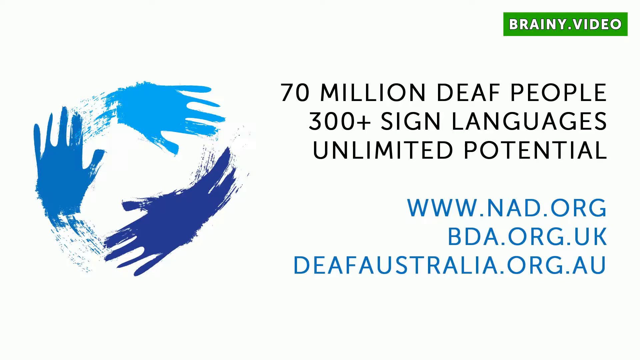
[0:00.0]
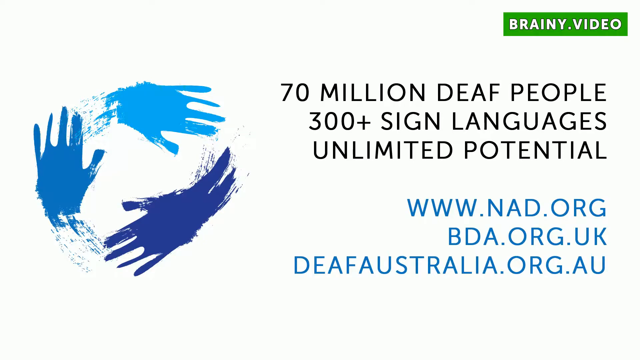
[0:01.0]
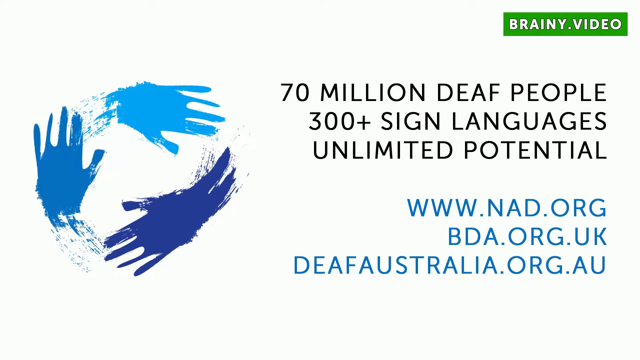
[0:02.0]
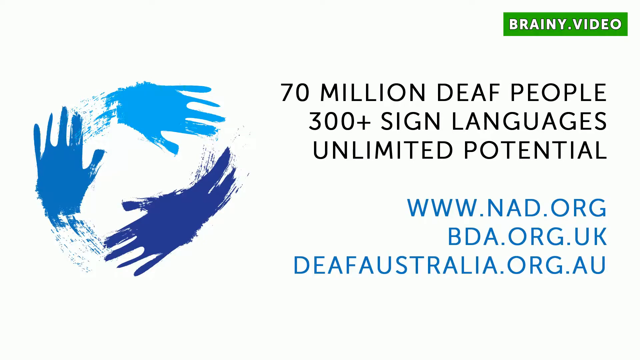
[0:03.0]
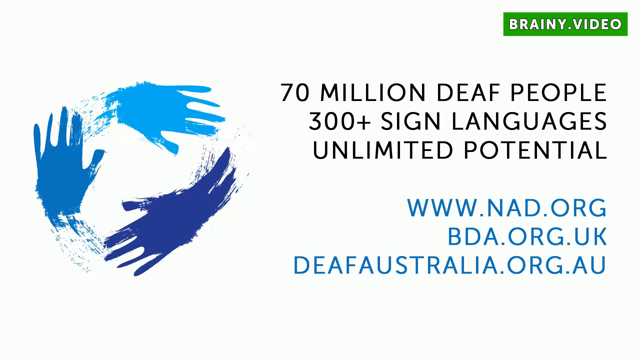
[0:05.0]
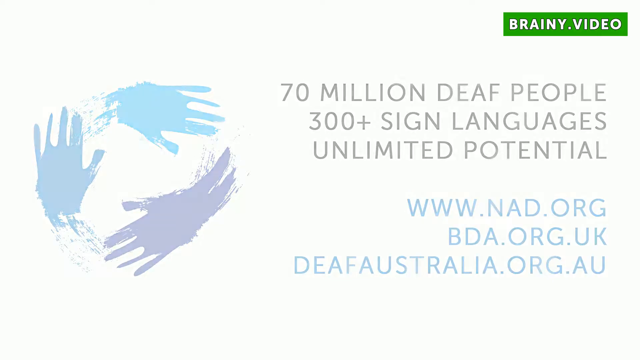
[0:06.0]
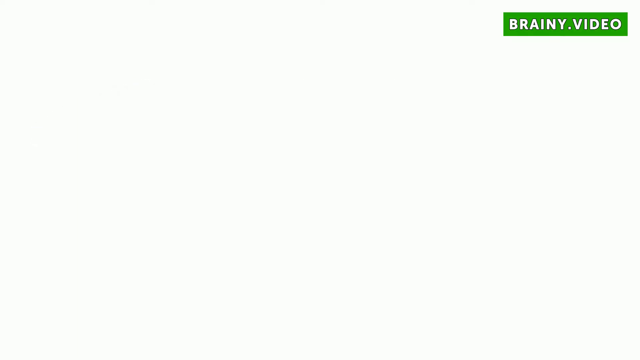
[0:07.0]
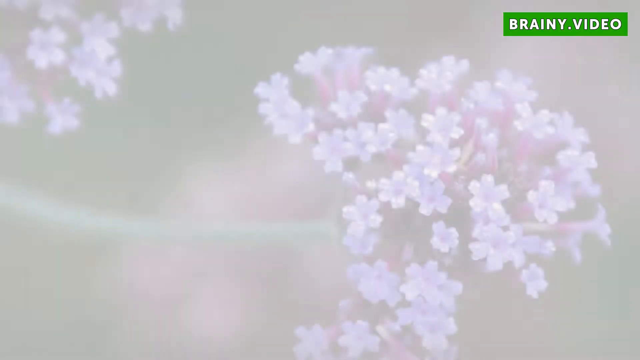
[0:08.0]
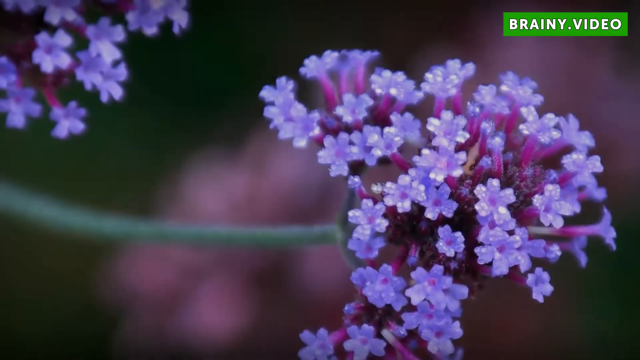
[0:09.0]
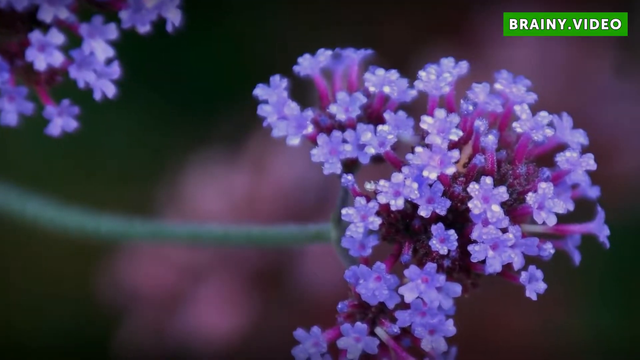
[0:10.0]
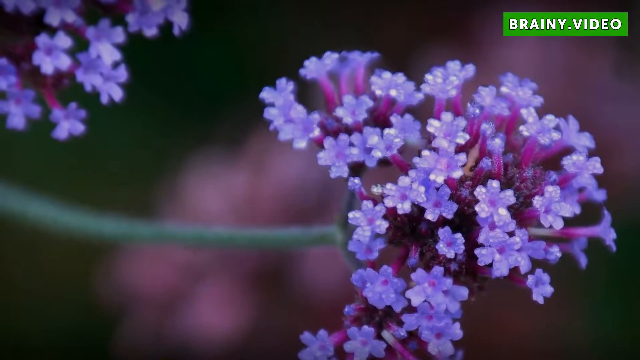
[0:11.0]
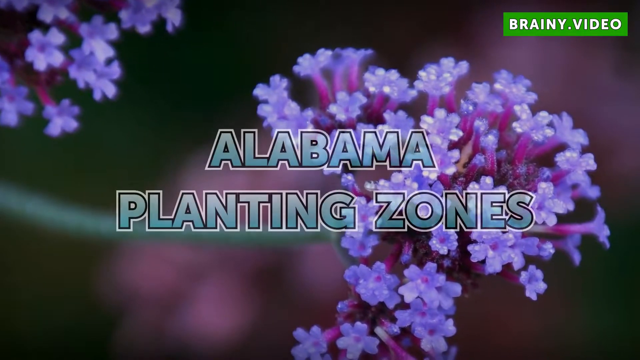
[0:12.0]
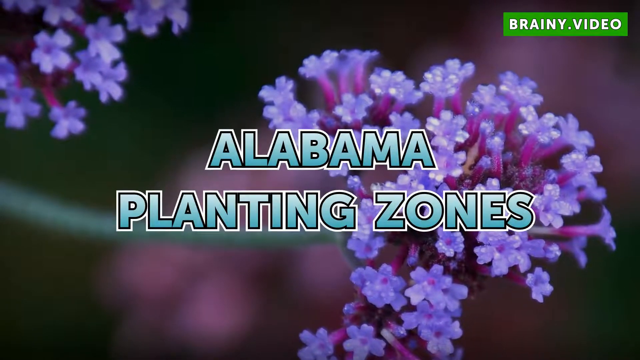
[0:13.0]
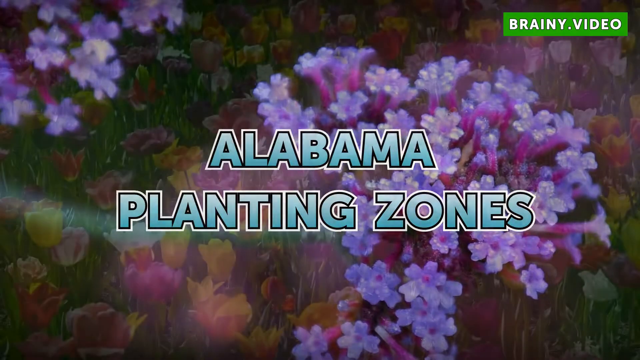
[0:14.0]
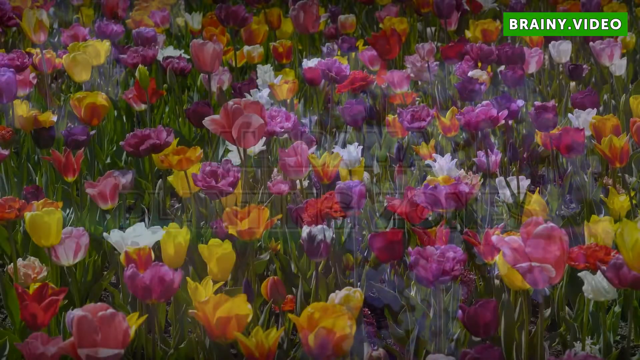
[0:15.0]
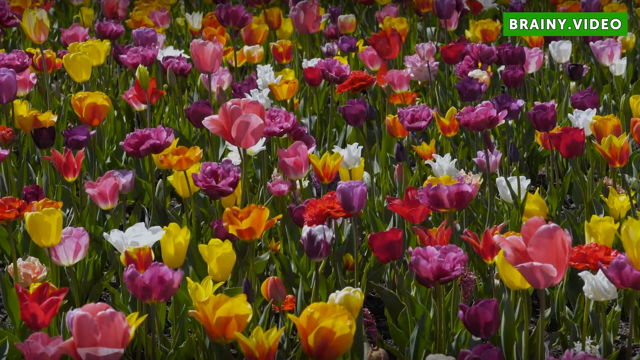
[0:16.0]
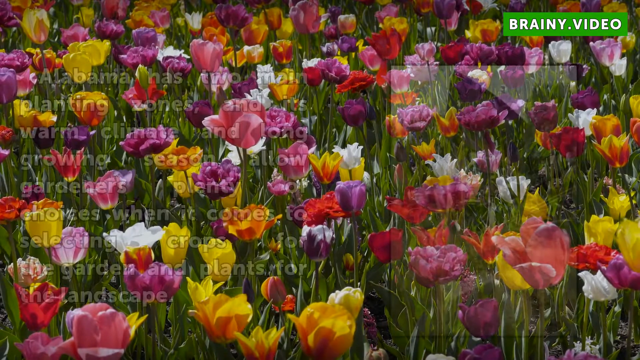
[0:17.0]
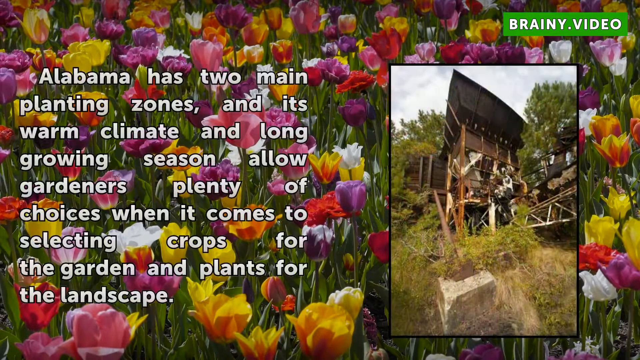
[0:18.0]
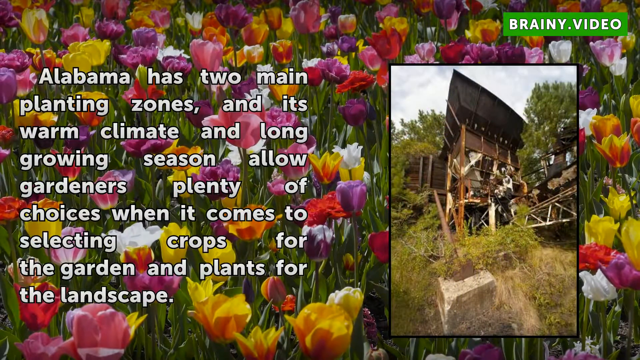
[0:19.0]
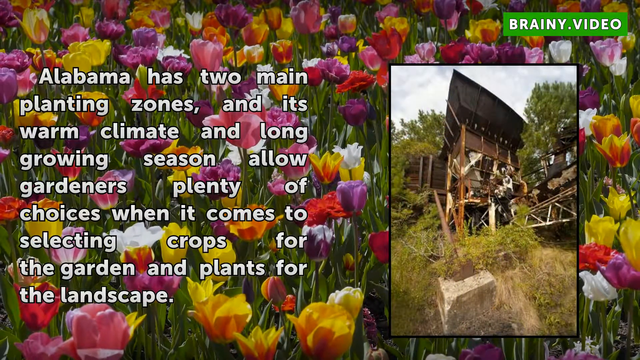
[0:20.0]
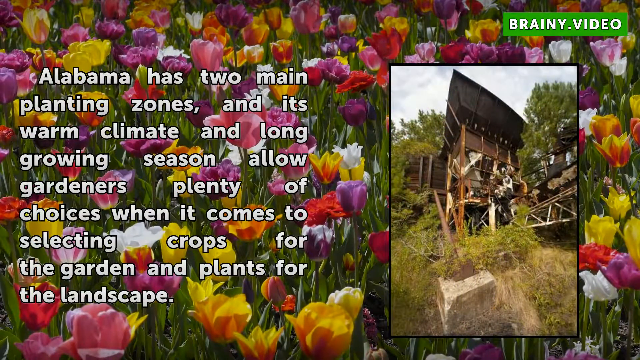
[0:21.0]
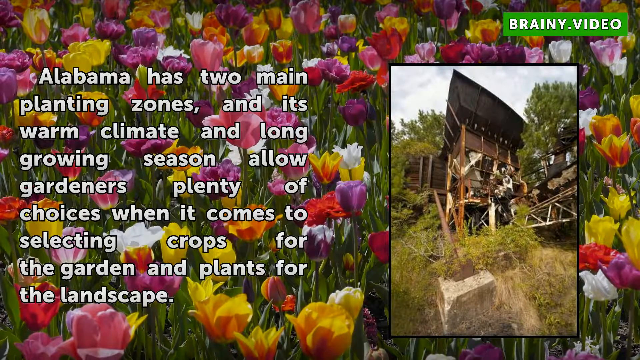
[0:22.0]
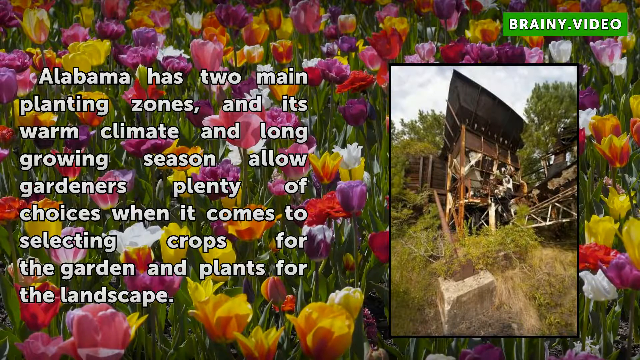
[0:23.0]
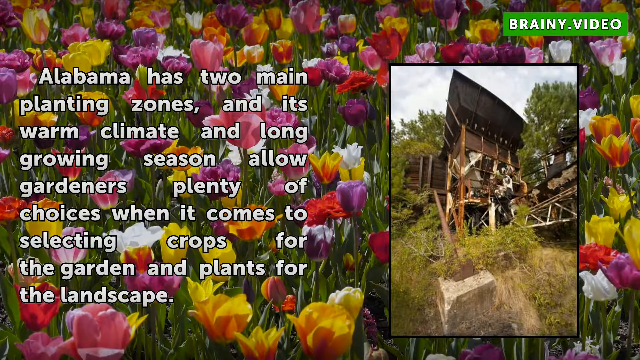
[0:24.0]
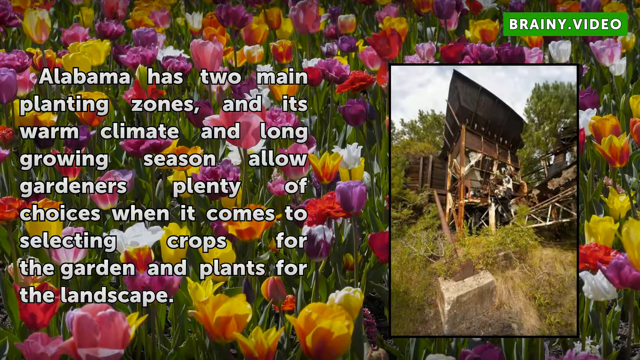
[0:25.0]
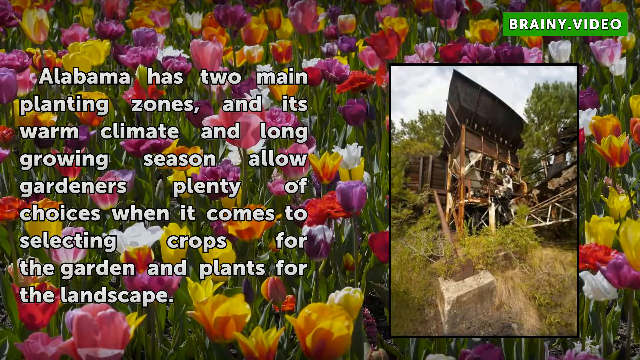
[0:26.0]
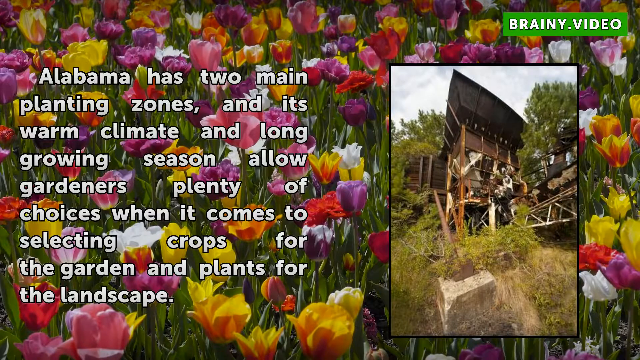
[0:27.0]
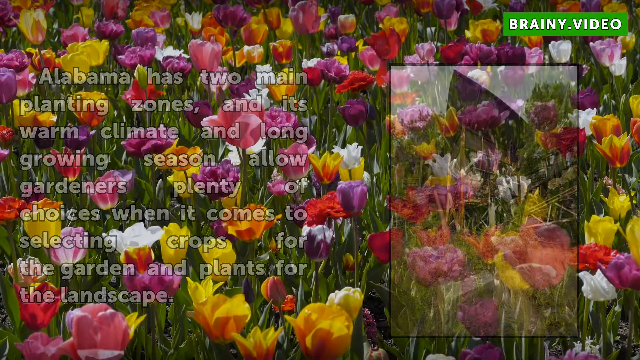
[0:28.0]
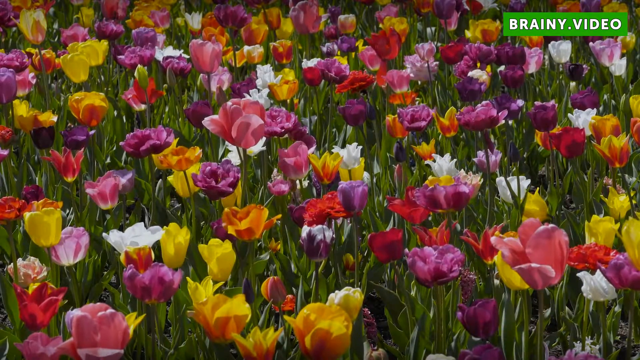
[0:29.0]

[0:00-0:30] The video opens on a white background with black capital-letter text on the right of the screen that reads "70 million deaf people, 300 plus sign languages, unlimited potential." Below it, in blue block letters, are three URLs: "www.nad.org", "bda.org.uk" and "deafaustralia.org.au". In the top right-hand corner is a small horizontal green rectangle with white text reading "brainy video". On the left of the screen is a logo of three blue hands in a roughly circular formation, one dark blue, one medium blue and one light blue. This image gradually fades out and is replaced by close-up footage of flowers on a stem in a garden, with the text "Alabama planting zones" appearing in the centre of the screen. The flowers are dozens of tiny purple flowers, each with five or six petals, clumped together in a cluster at the end of a green stem. The next scene shows a field full of poppies in yellow, pink, red, orange, white and purple. Over this footage, white text reads "Alabama has two main planting zones and its warm climate and long growing season allow gardeners plenty of choices when it comes to selecting crops for the garden and plants for the landscape." On the right side of the screen is a photo whose subject is unclear; it seems to be some kind of structure built in an outdoor environment. The poppies move slightly in the breeze. The photo and text then disappear, leaving the footage of the field of poppies.